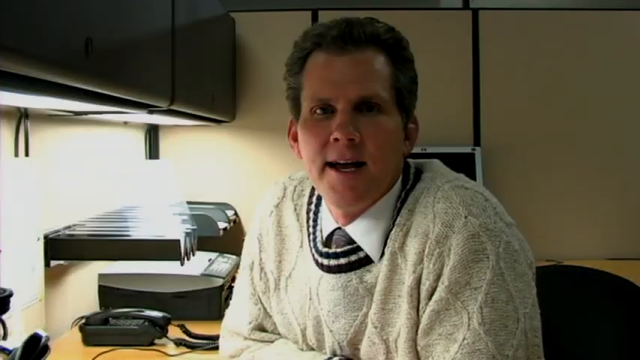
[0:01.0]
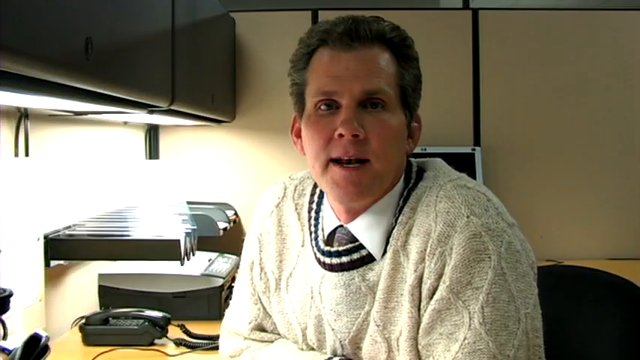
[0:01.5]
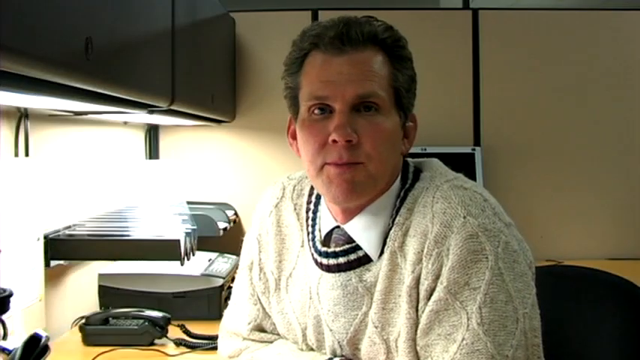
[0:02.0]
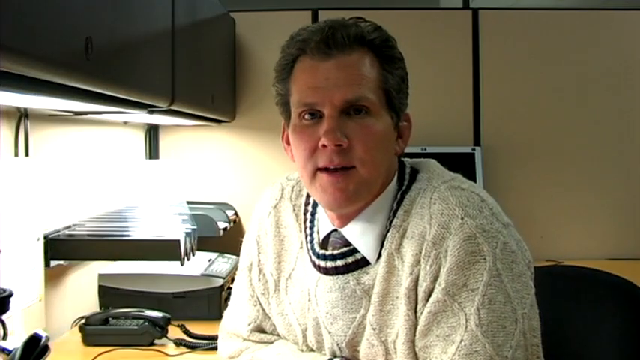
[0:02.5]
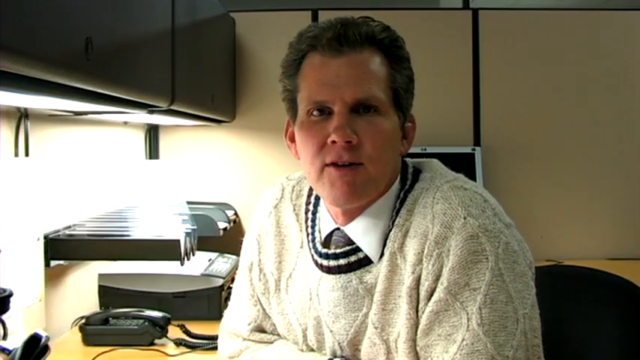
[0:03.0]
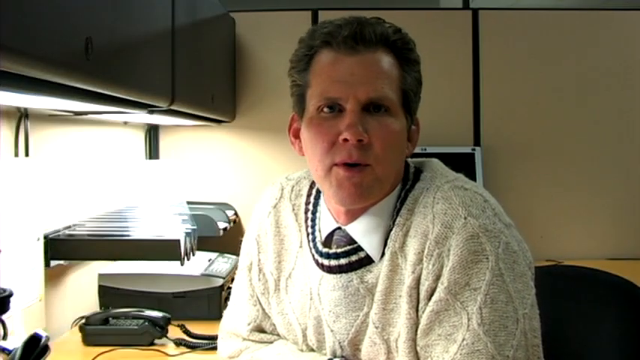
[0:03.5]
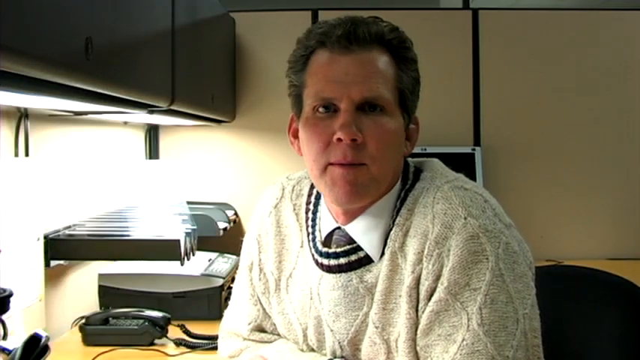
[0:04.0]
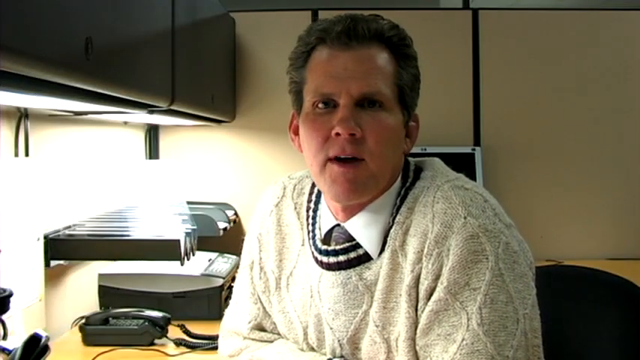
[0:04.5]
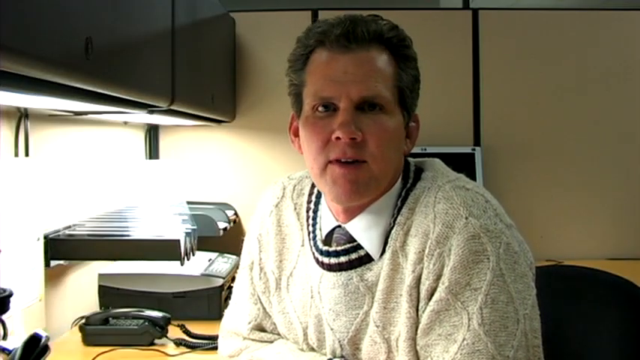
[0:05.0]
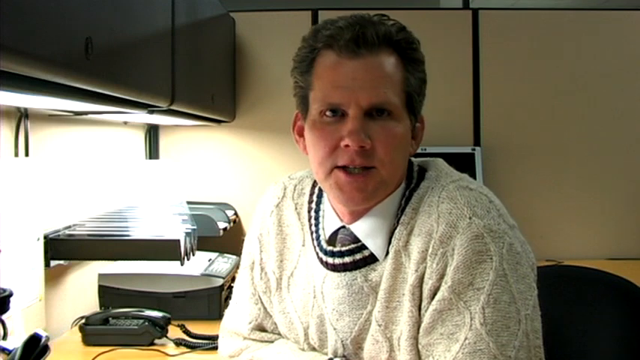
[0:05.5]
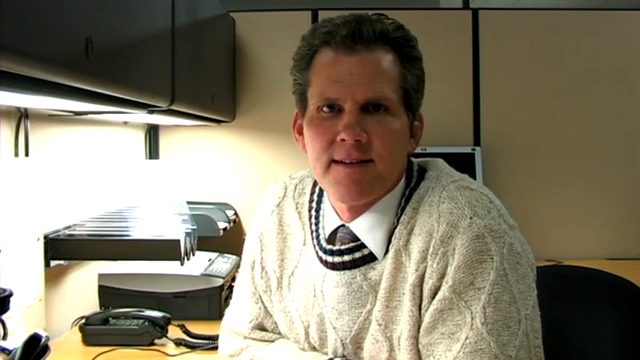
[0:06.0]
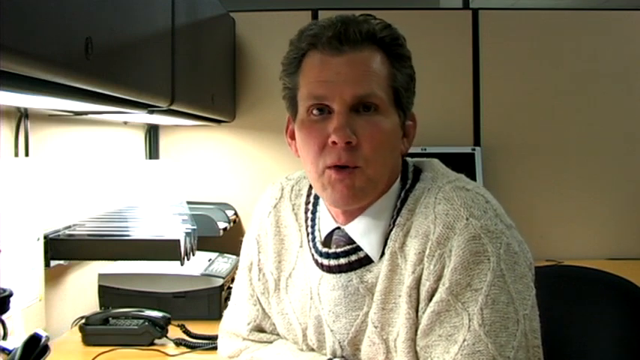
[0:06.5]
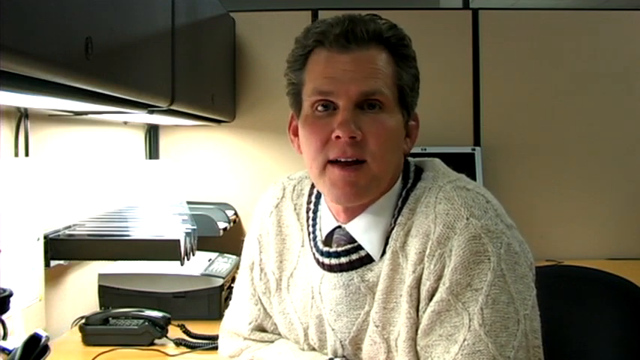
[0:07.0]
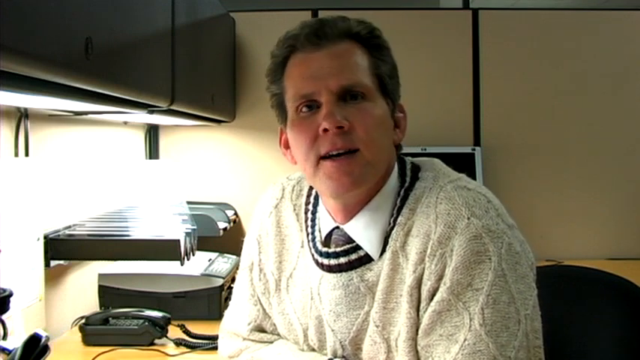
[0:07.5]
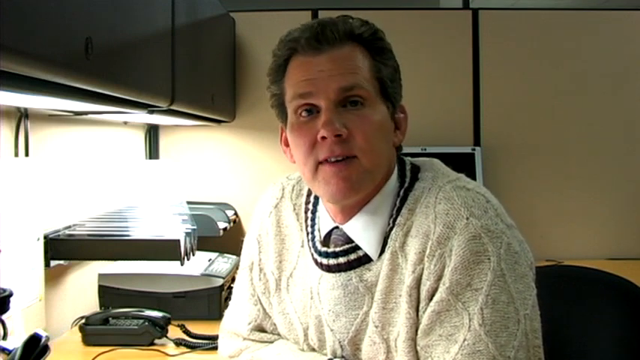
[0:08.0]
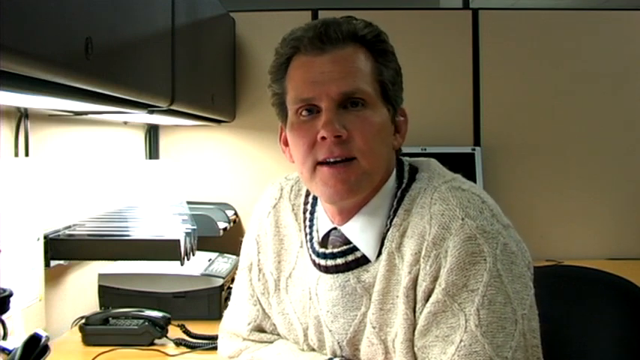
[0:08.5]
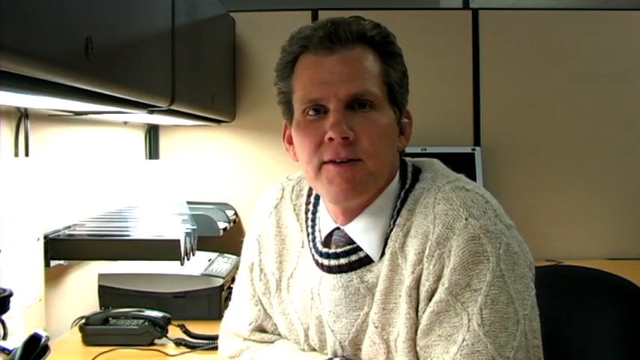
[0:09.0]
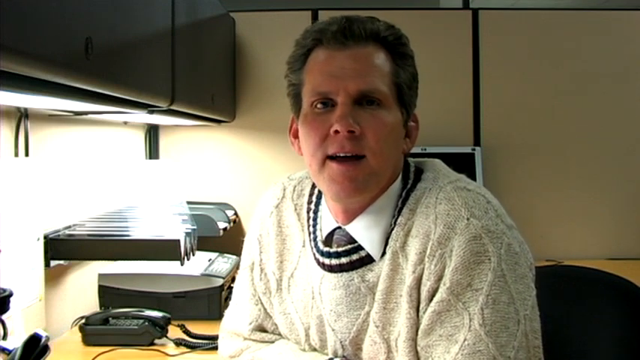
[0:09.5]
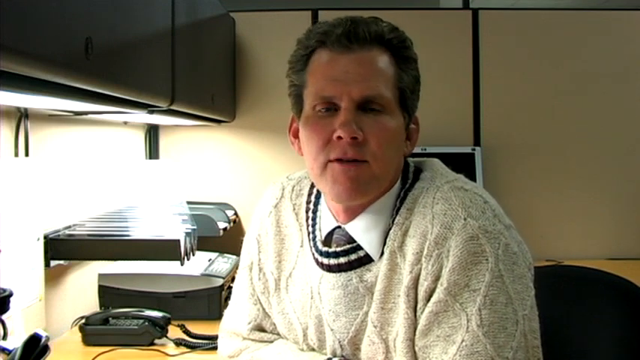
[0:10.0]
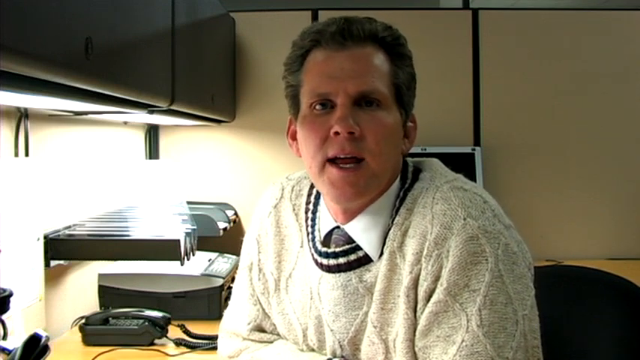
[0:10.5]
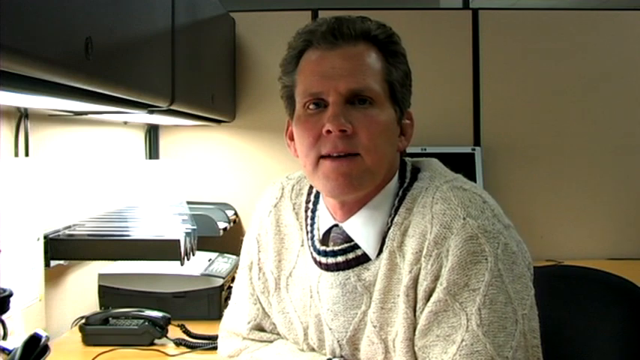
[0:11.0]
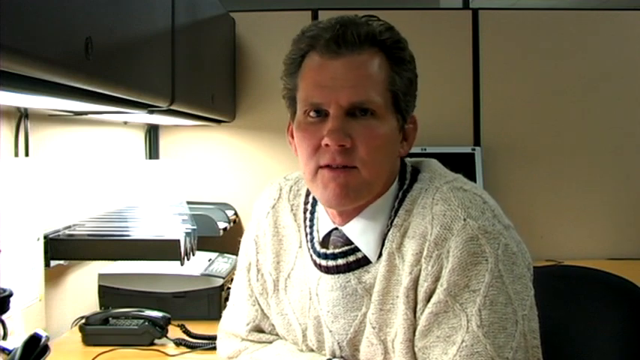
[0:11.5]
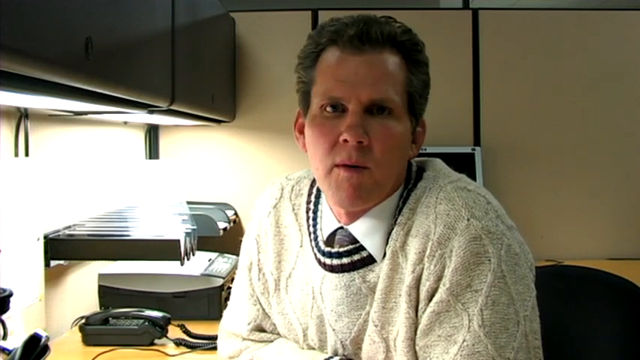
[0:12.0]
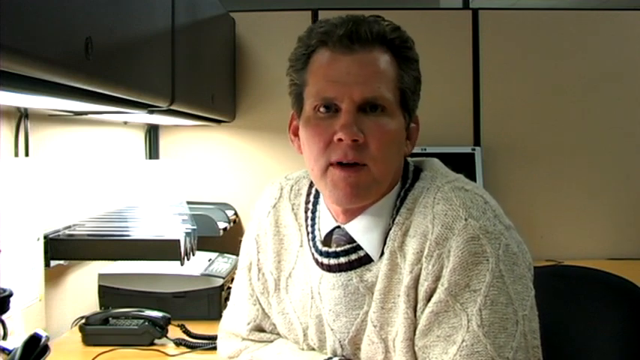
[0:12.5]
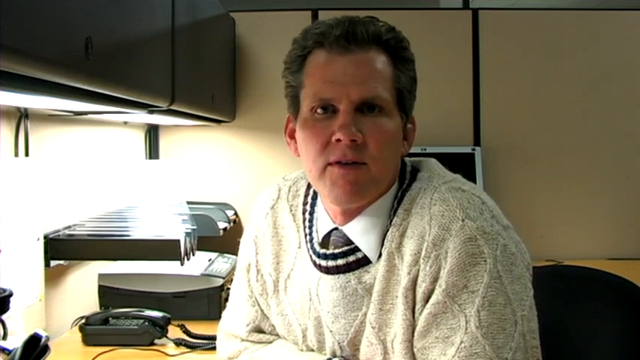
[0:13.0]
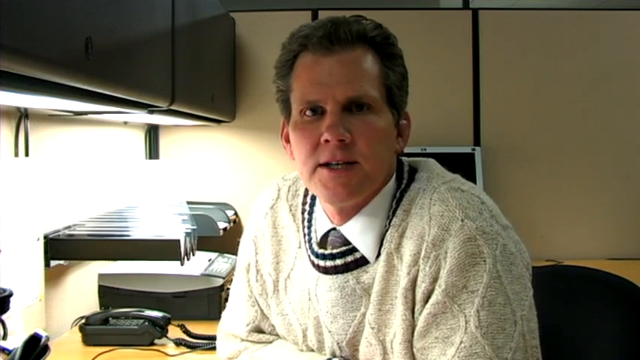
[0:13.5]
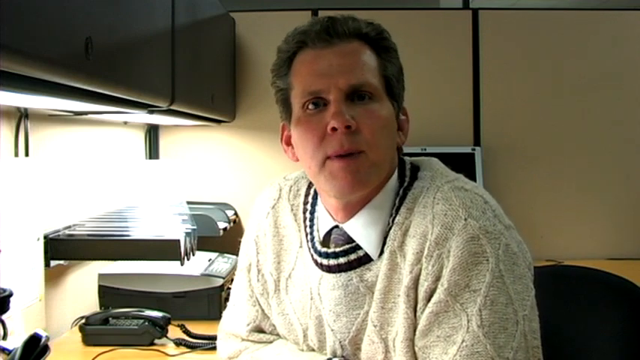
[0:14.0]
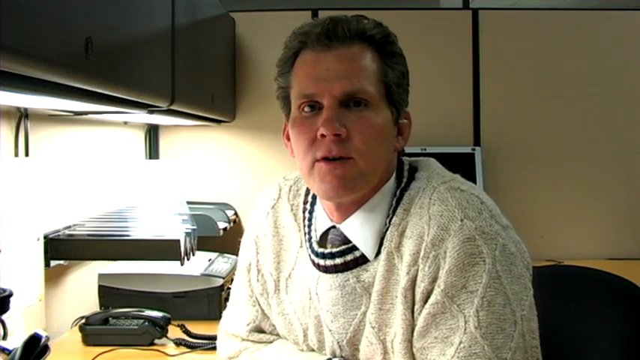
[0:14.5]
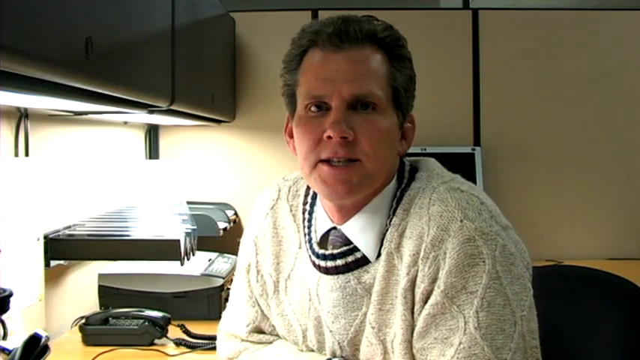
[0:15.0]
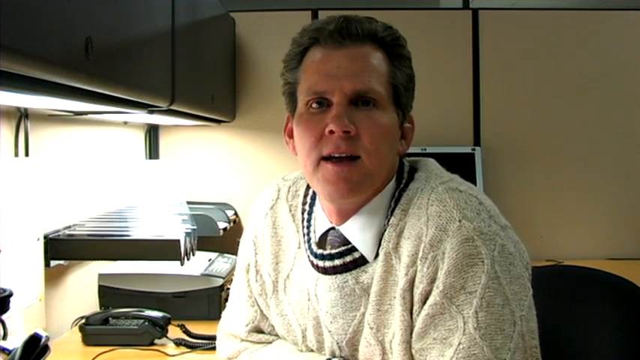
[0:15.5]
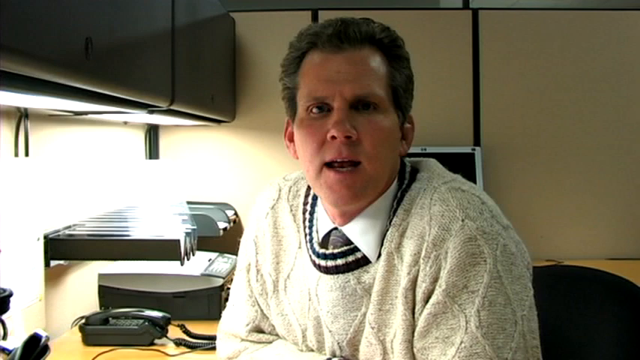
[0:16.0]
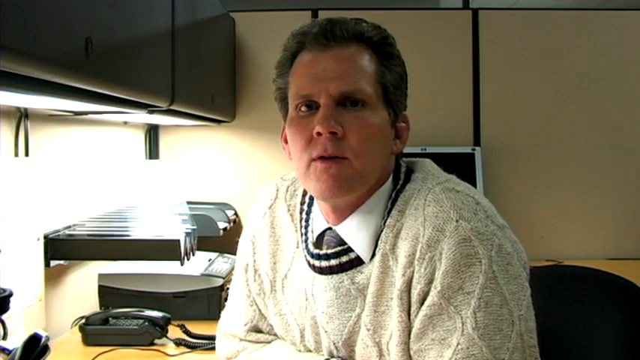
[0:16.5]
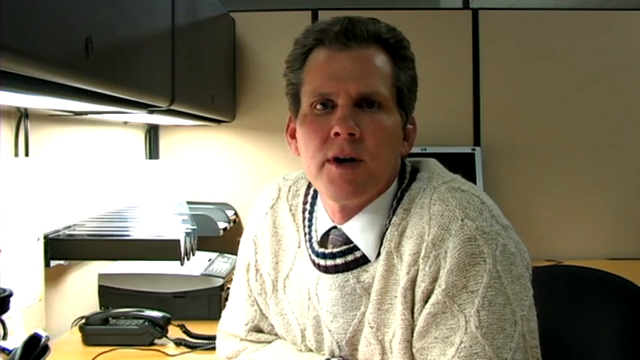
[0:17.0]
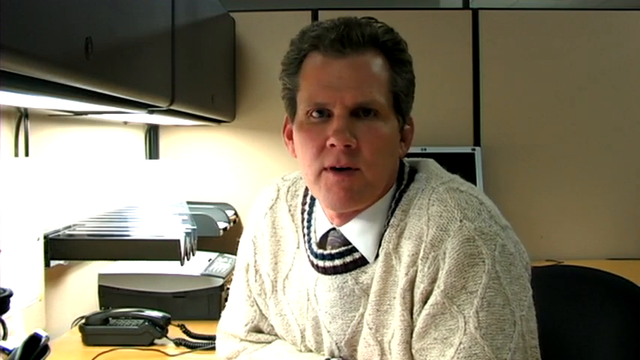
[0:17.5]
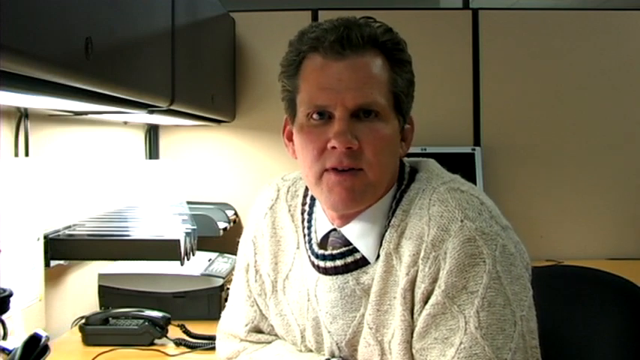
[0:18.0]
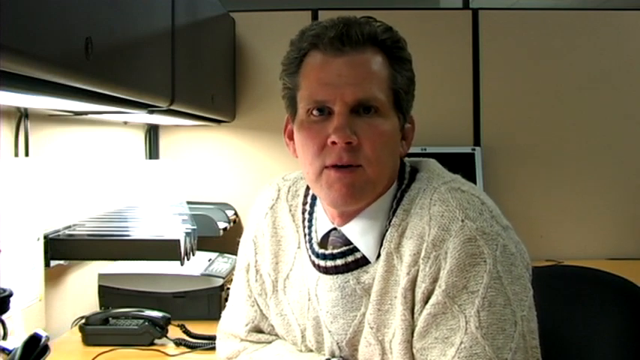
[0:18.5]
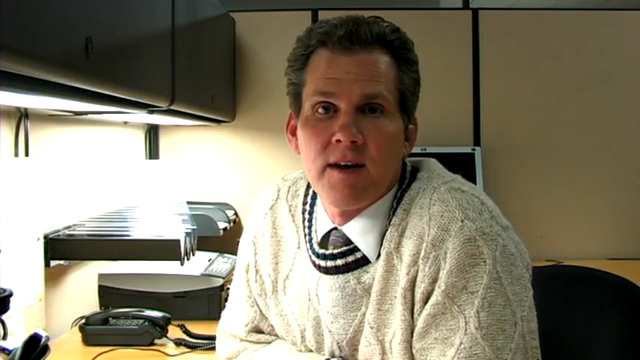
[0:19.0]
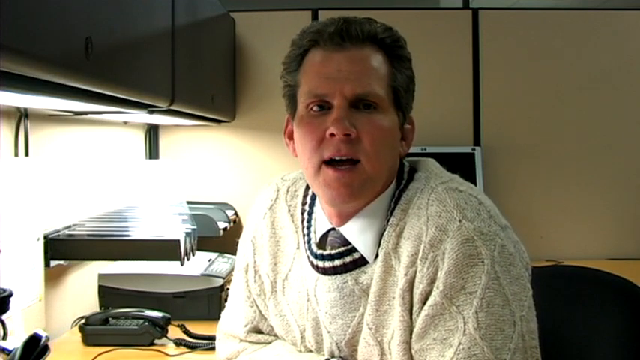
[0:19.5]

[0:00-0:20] A middle-aged man sits in what looks like an office cubicle, talking directly to the camera. He wears a collared shirt and tie with a chunky sweater over the top, and he is probably sitting in an office chair at a desk. Behind him are a printer or fax machine, a grey desk phone, and what looks like an open laptop screen. To his left and slightly above him are some cabinets, maybe with bright lights under them that rather overexpose the back of the image. The shot is a straightforward piece to camera with no embellishment or visual effects.